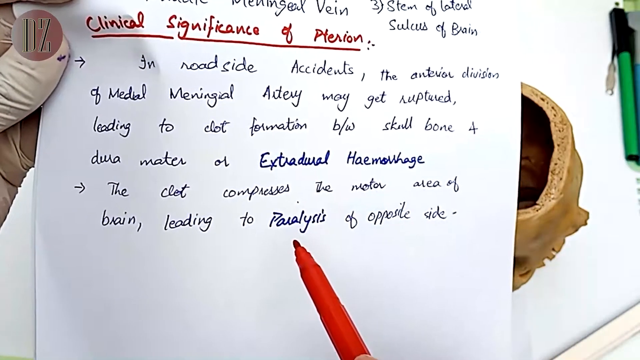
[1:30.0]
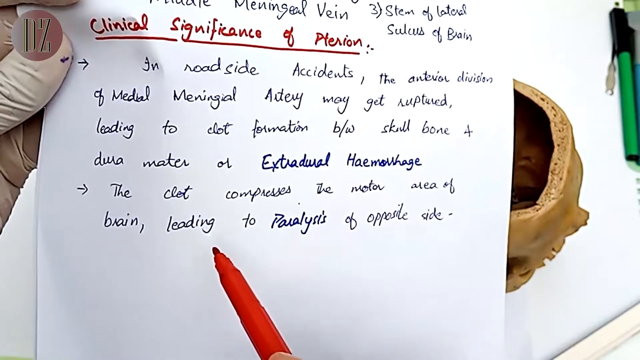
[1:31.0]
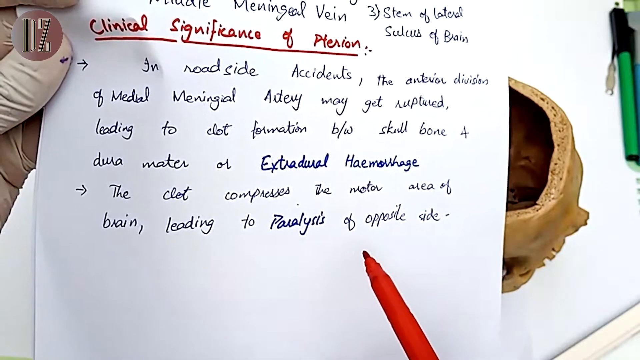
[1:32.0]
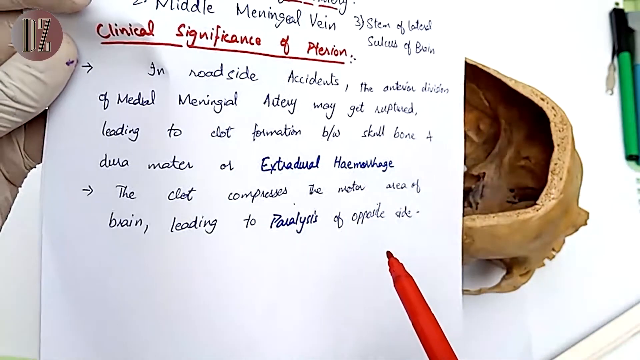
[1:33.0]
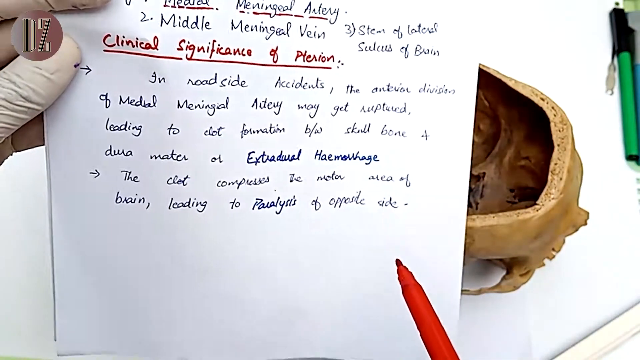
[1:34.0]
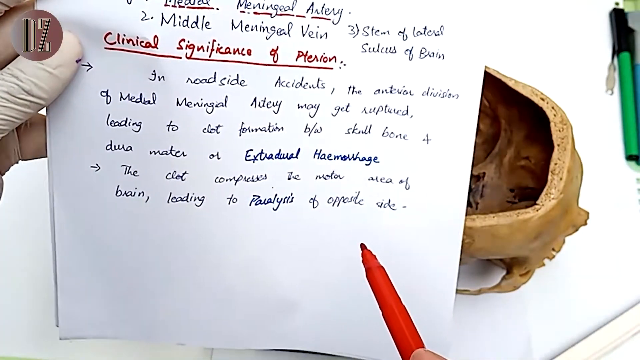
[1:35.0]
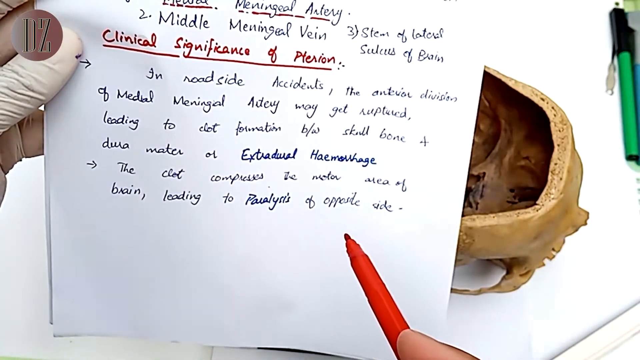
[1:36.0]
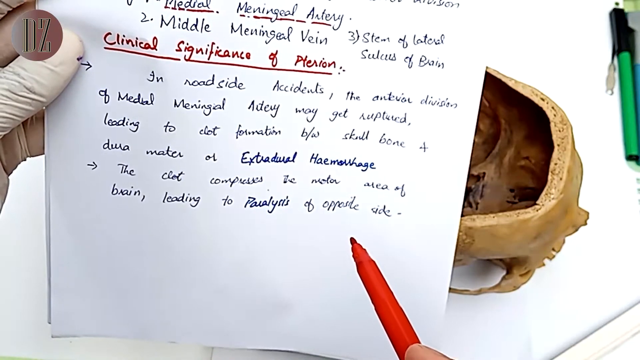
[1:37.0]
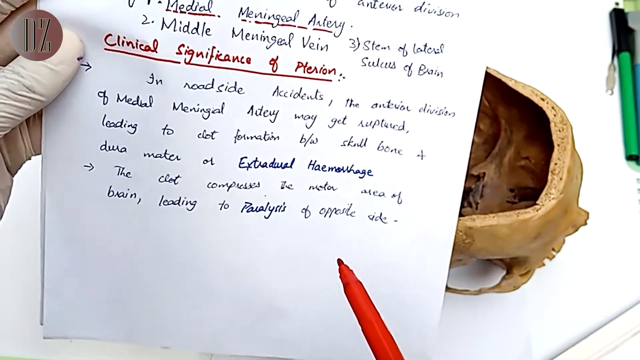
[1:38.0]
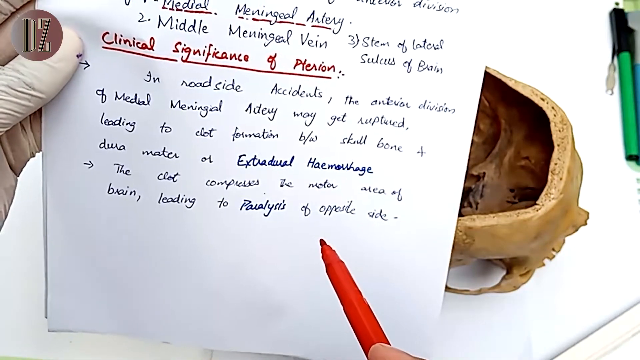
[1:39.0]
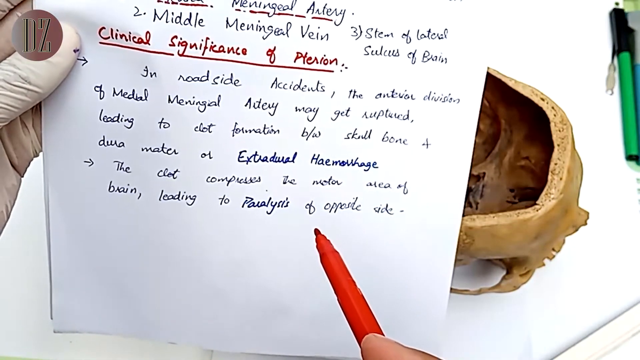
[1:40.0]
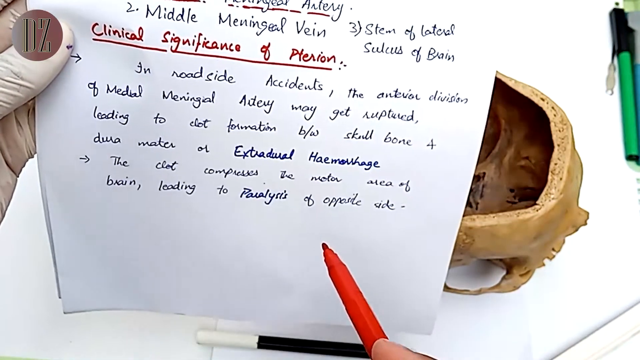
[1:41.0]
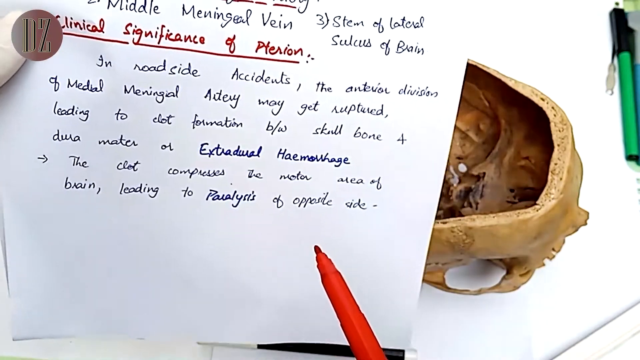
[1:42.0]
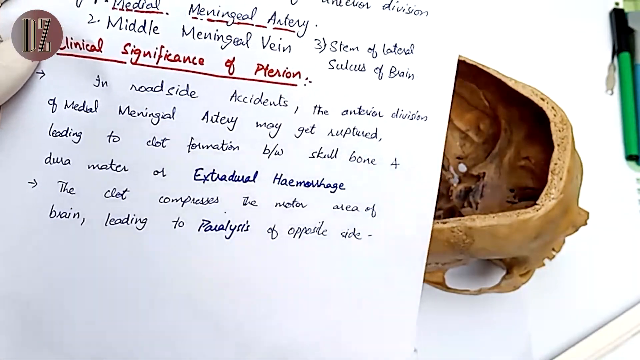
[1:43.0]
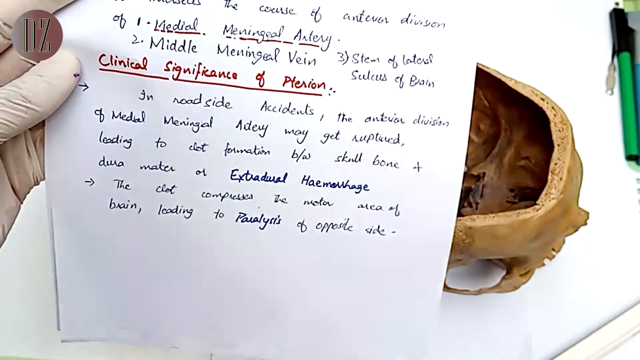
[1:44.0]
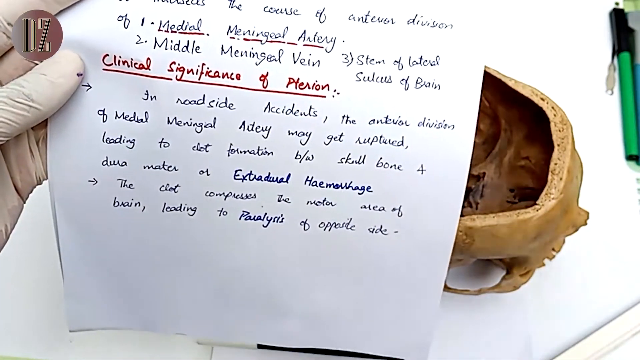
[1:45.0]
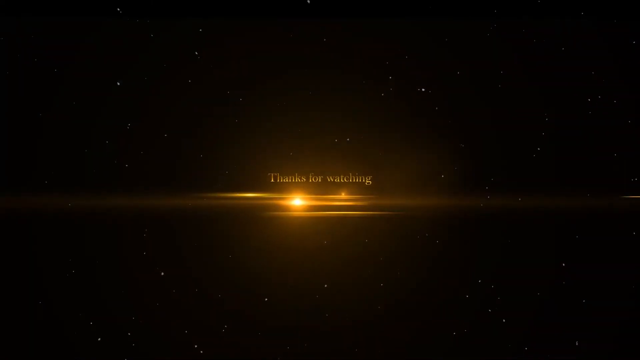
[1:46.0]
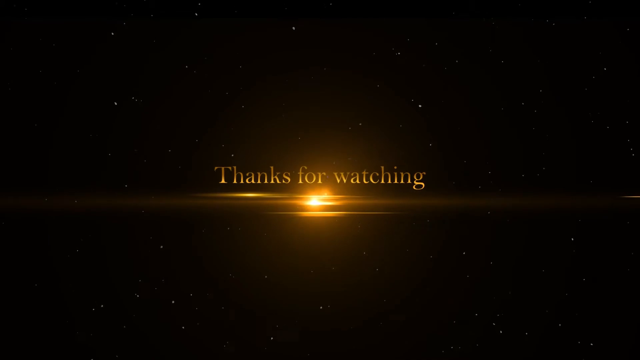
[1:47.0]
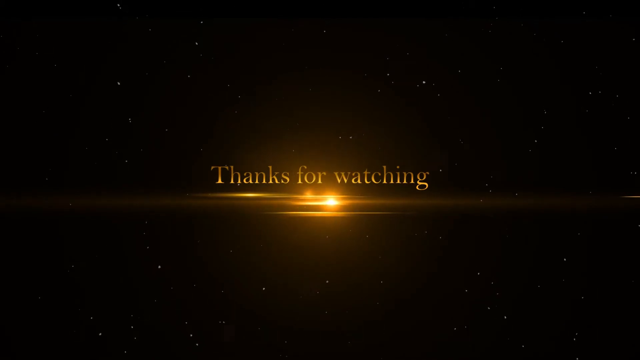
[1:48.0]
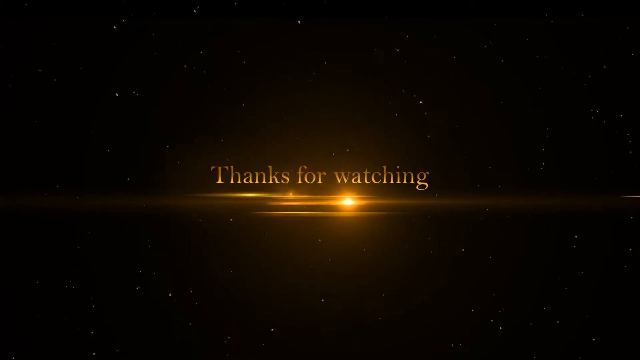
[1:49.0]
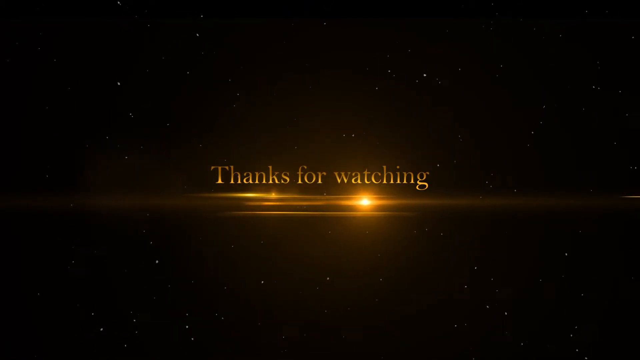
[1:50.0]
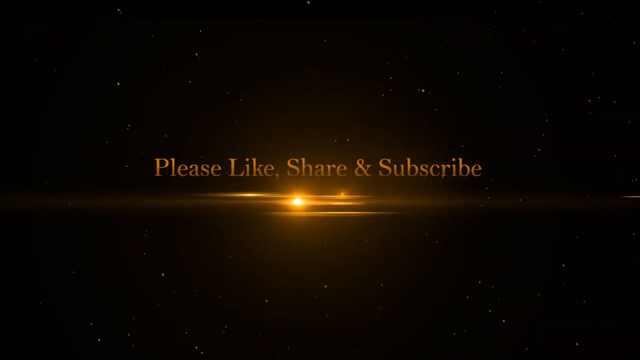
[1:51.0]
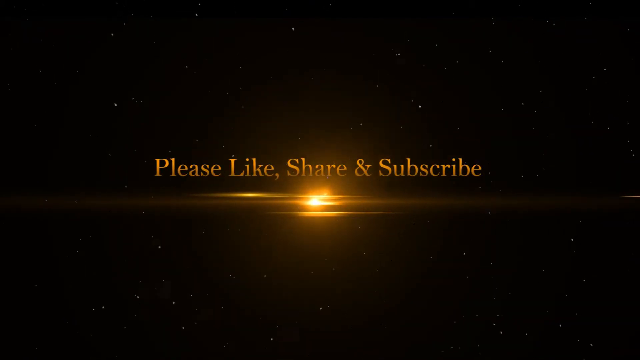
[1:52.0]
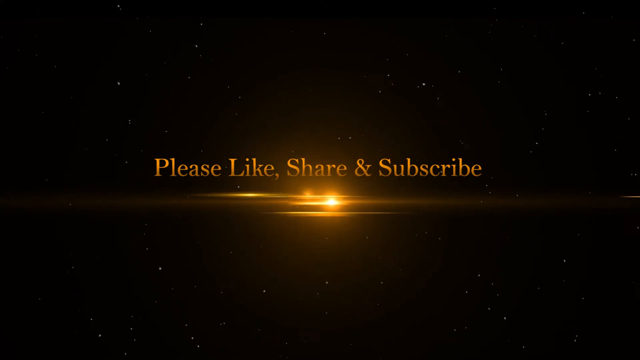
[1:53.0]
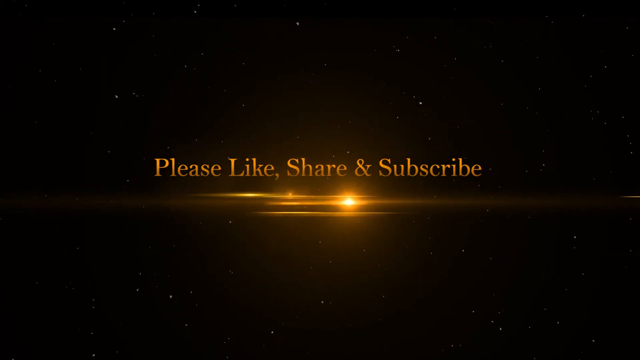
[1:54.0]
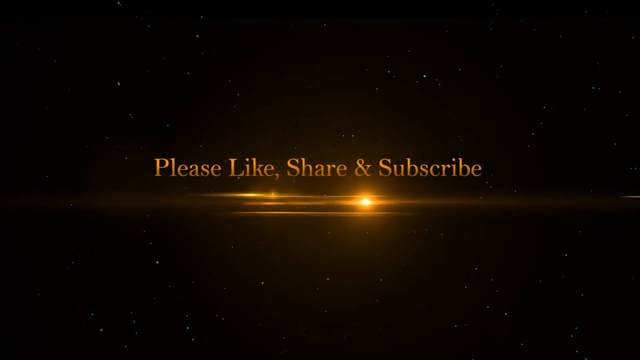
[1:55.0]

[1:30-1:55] A piece of white paper with no lines is held between the left thumb and the index, middle, ring and pinky fingers of a person whose hand wears a surgical glove. The text is mostly in black ink, in a mixture of cursive and print. Four words are written in red marker and underlined: "clinical significance of pterion". There are also words written in blue ink: "extradural", "hemorrhage" and "paralysis". The person holds the red marker in their right hand and uses it to point out words as if reading them. There is a desk below with a human skull on it that has no cap and no lower jaw bone. A piece of white paper ripped out of a spiral binder also covers the desk, and two writing pens lie on it: one green with a black cap, the other blue with a gray cap. The video ends with inky blackness in outer space and amber.